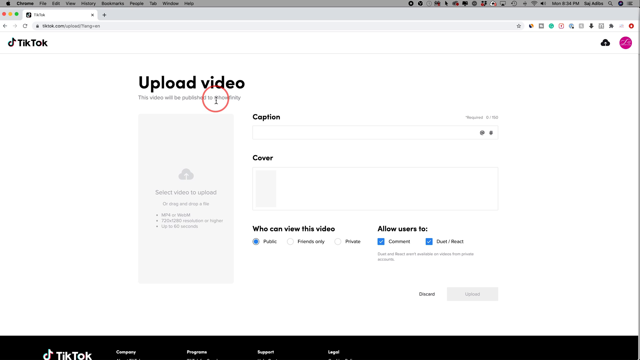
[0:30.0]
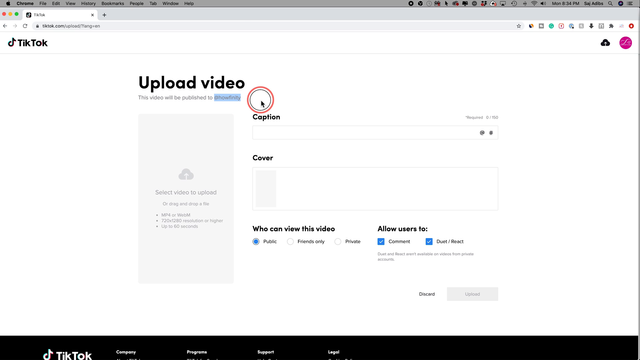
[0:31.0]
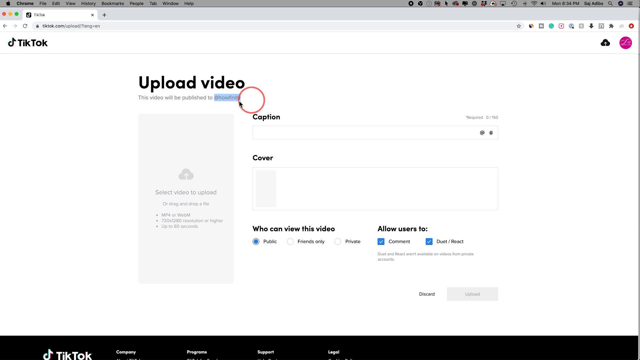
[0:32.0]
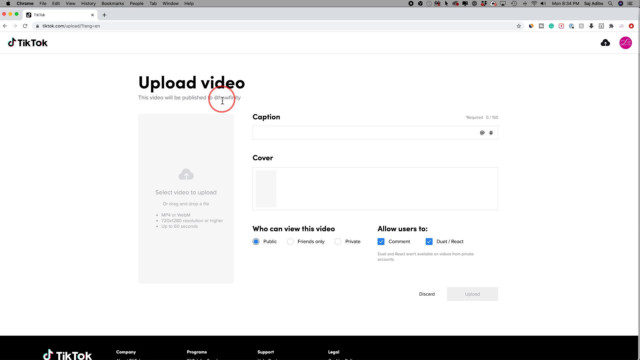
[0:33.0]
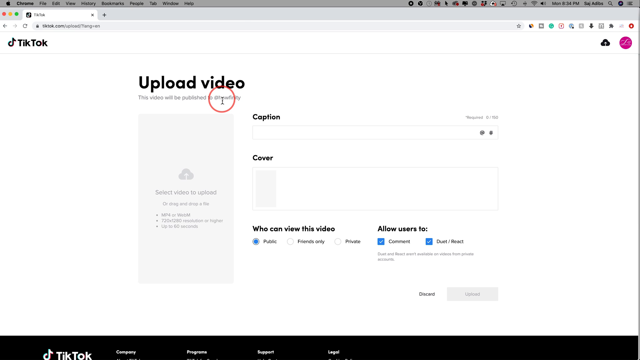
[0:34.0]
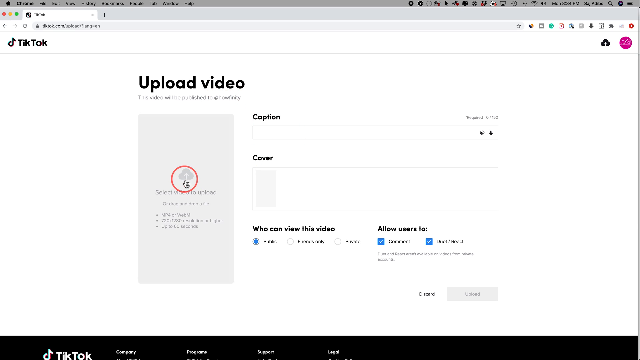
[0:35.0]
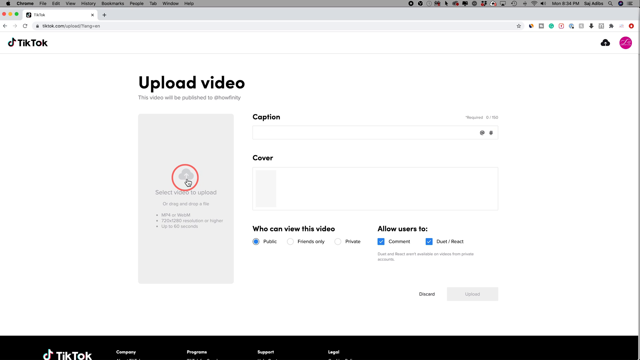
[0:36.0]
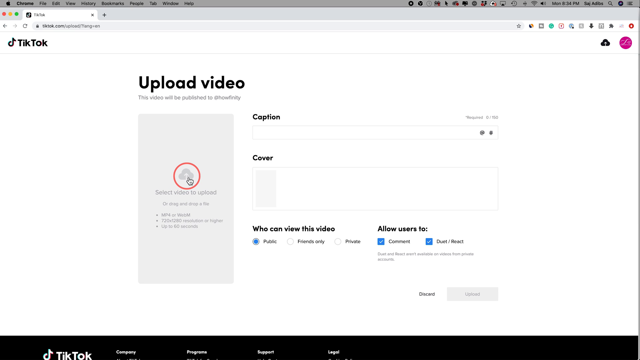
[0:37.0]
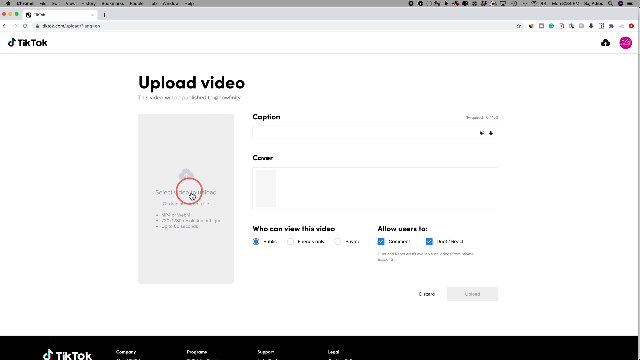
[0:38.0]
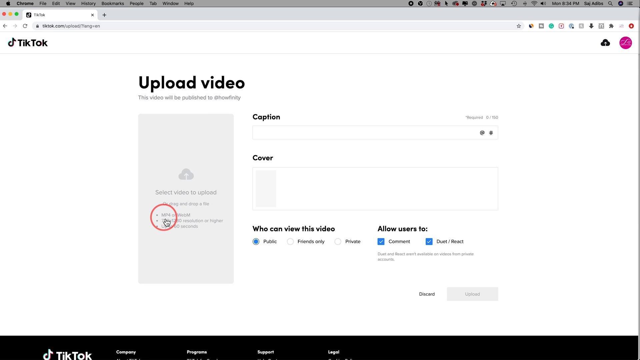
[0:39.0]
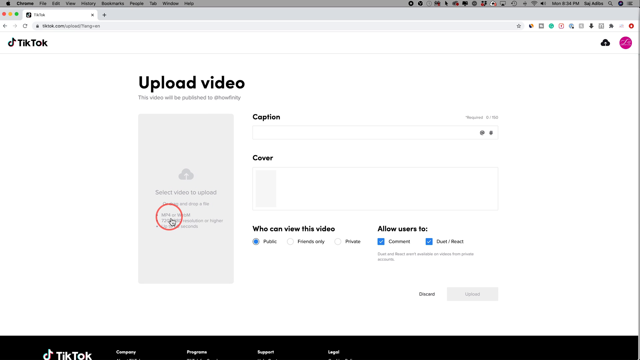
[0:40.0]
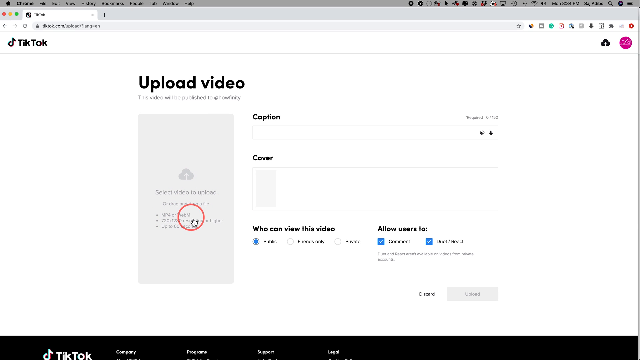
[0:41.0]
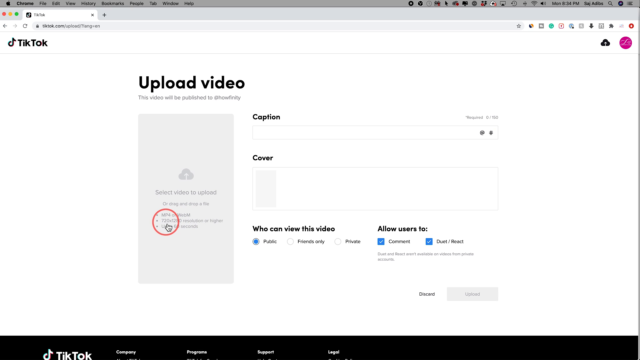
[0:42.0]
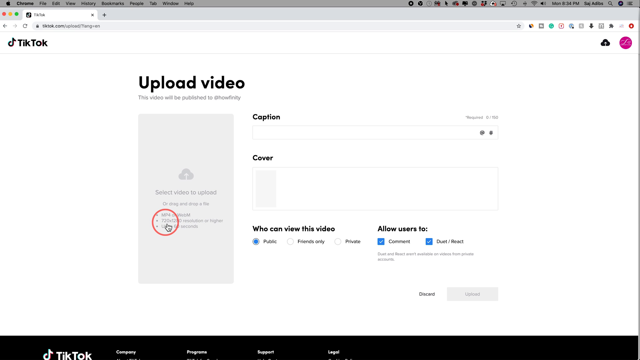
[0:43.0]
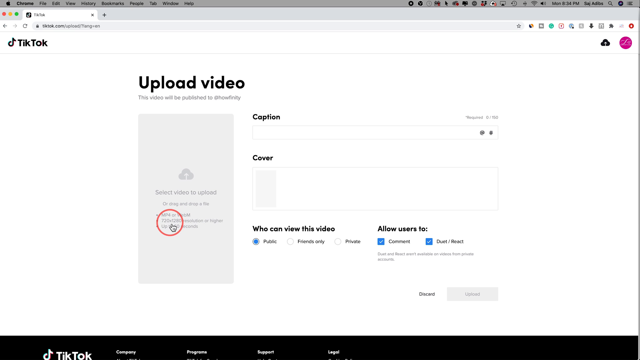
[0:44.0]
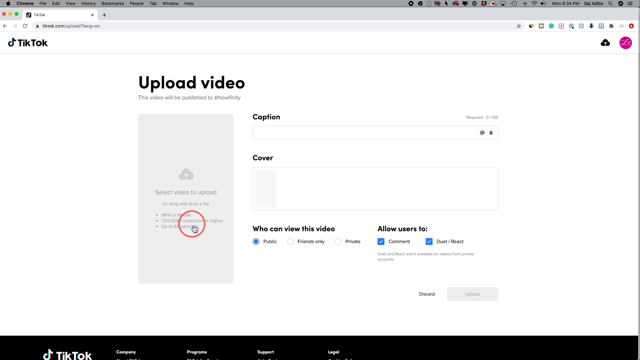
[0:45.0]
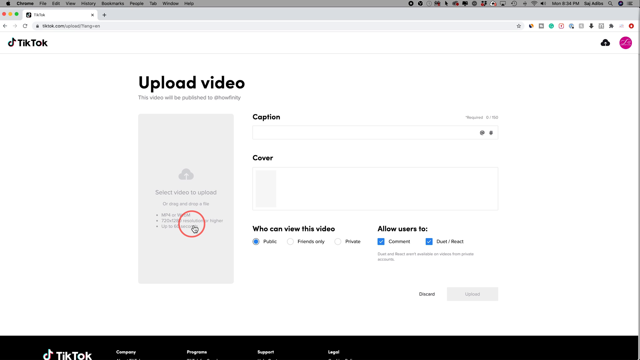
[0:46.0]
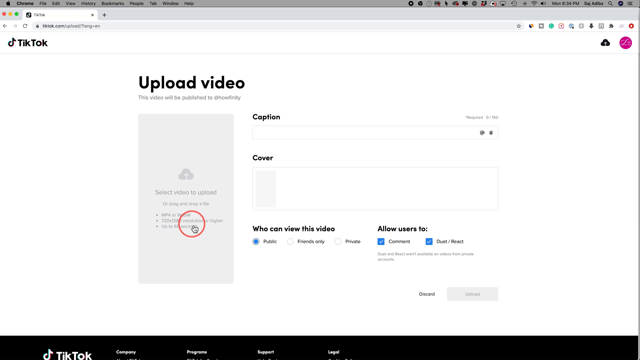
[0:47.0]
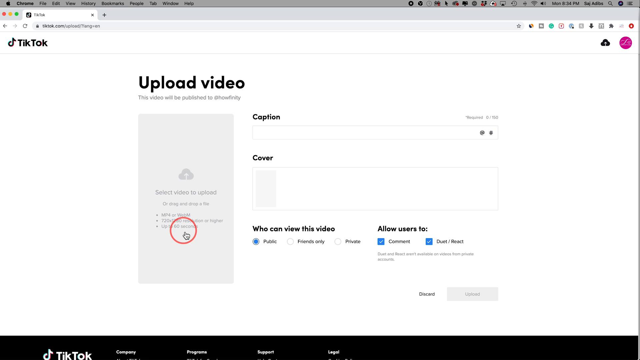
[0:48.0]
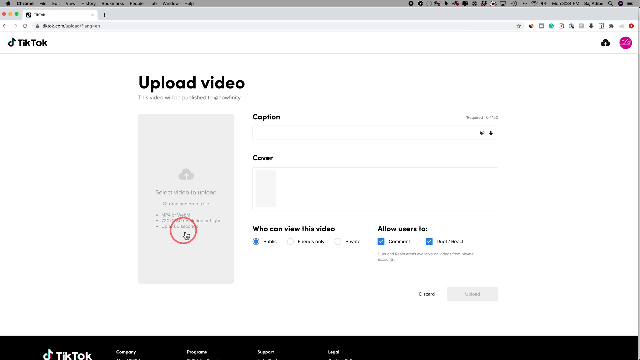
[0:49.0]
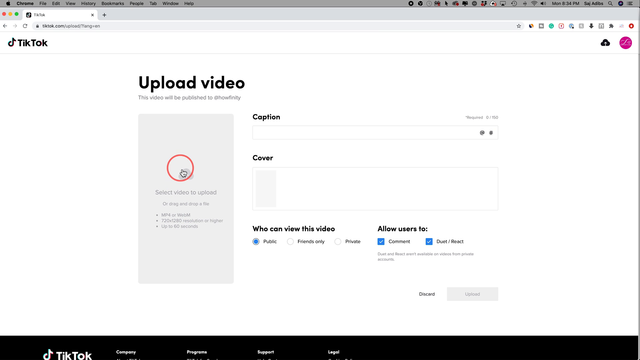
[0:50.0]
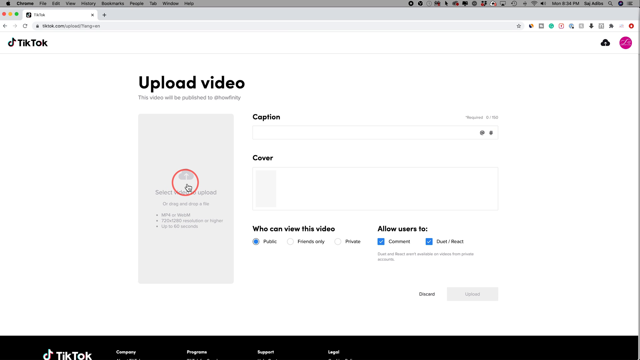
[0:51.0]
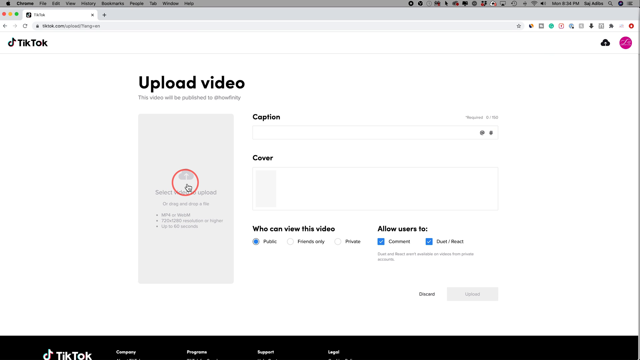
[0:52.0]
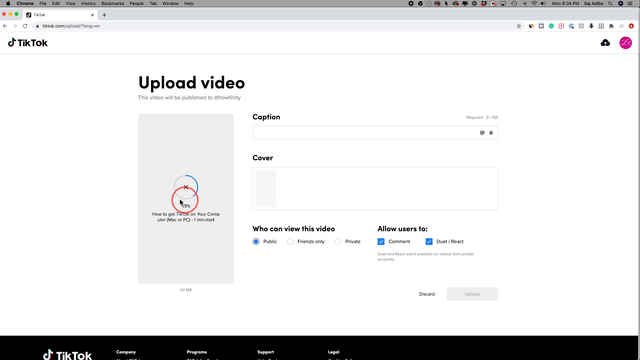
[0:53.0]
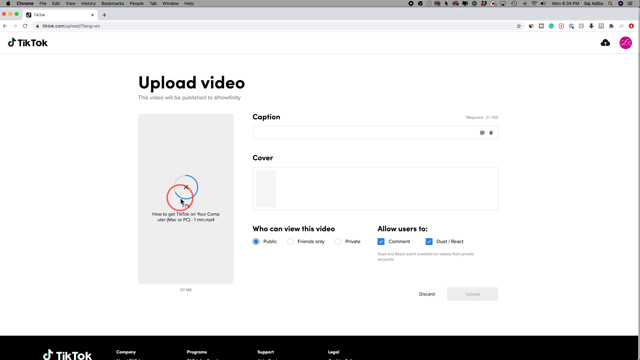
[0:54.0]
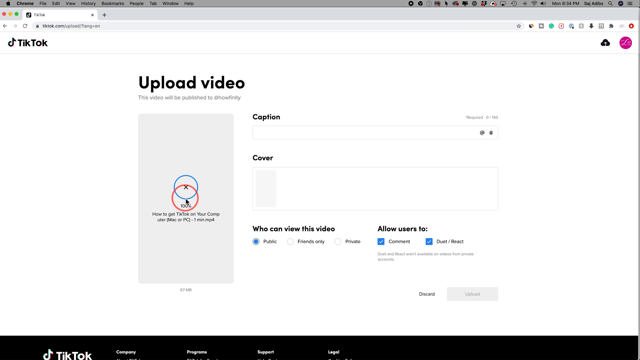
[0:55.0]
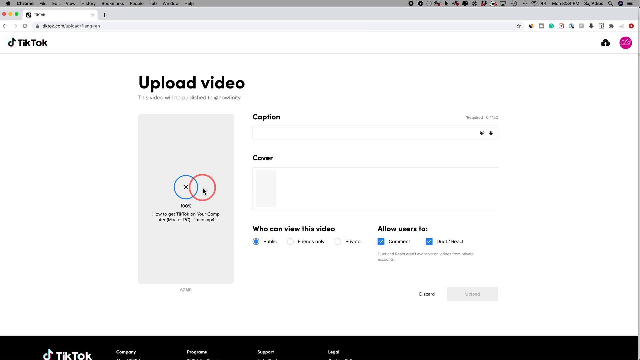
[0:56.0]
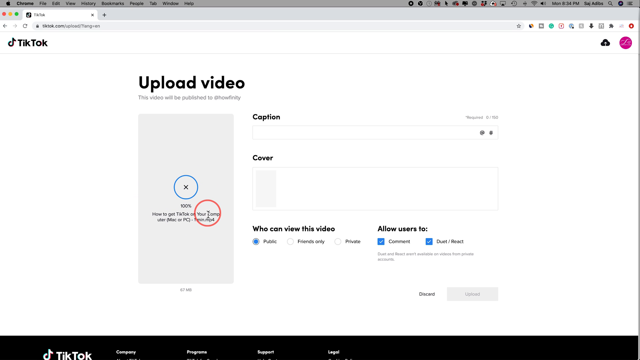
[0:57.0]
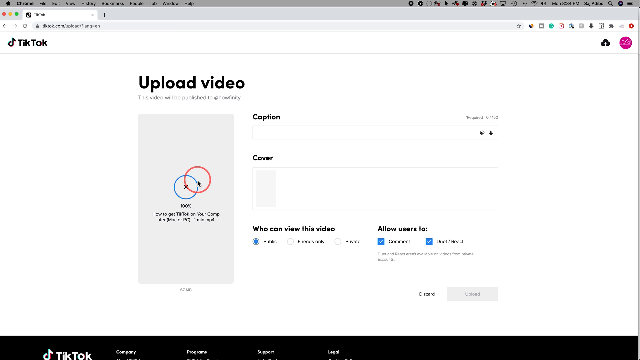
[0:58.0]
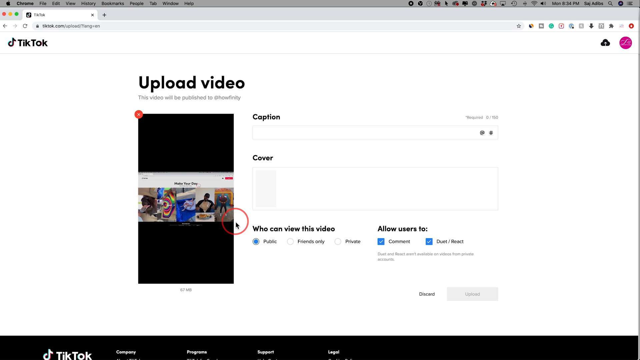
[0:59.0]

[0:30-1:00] The cursor, surrounded by a red circle, highlights the text "@howfinity" under the upload video heading on the TikTok upload page, then clicks the highlighted text again, deselecting it. It briefly moves to the blank caption text field, then to the cloud icon on the gray box beneath the upload video header, where the video to upload is selected, circling a little while hovering over the icon. It then moves down to the video parameters under the words "Select Video to Upload," a bulleted list of what can be uploaded: the cursor runs along "MP4 or WebM," then "720 by 1280 resolution or higher," and finally "up to 60 seconds." The cursor goes back up to the cloud icon and clicks it, and a menu briefly pops up showing the videos available on the computer. A video is clicked to upload, and the cloud icon turns into an X inside a circle surrounded by a circular loading progress bar that is gray and gradually fills with blue. At 100%, the gray box shows text beginning "how to get TikTok on your phone or Mac or PC" and ending in ".MP4," apparently the name of the uploaded file. Once uploaded, the video plays, showing the earlier videos: the bison sticking its snout into the car, the paint pouring, the woman in the pool with the swan, the black man eating chicken nuggets and the old man dancing. The video also appears as a smaller thumbnail in the section labeled "cover."